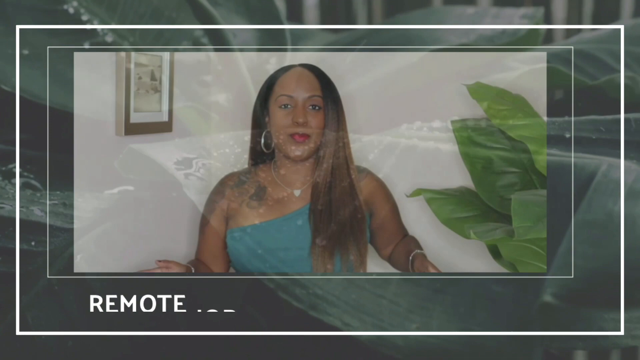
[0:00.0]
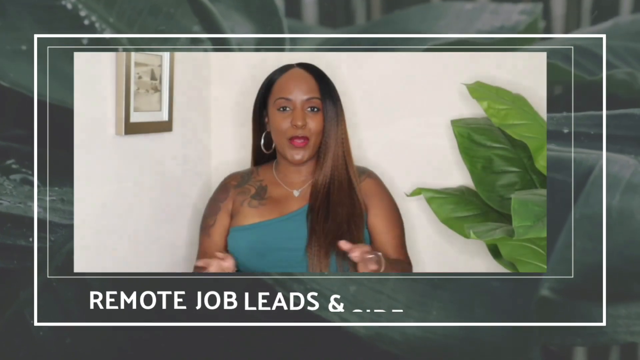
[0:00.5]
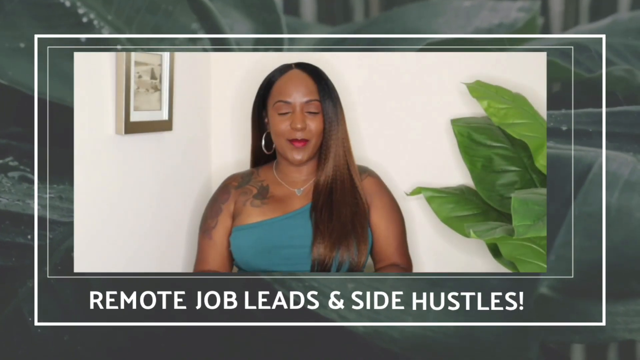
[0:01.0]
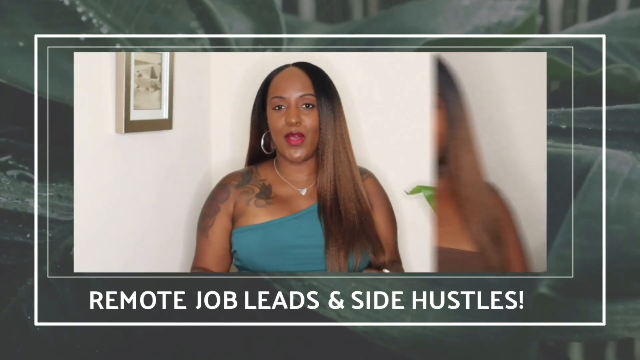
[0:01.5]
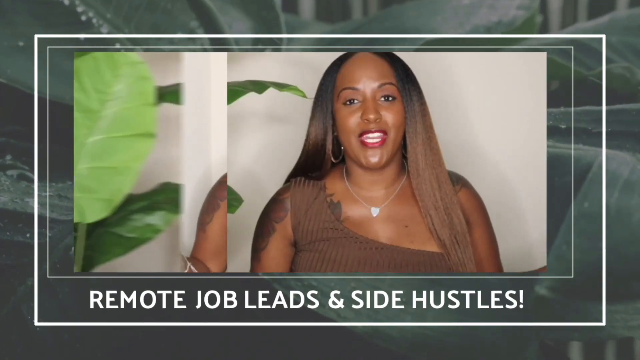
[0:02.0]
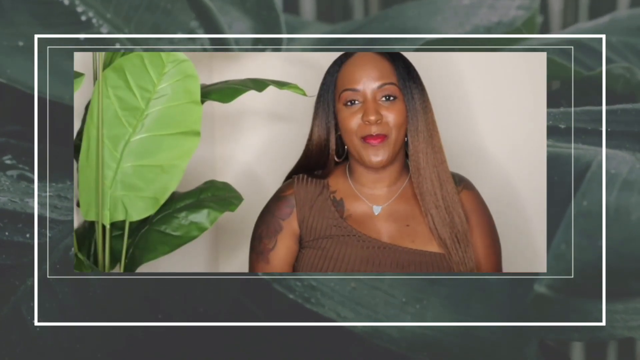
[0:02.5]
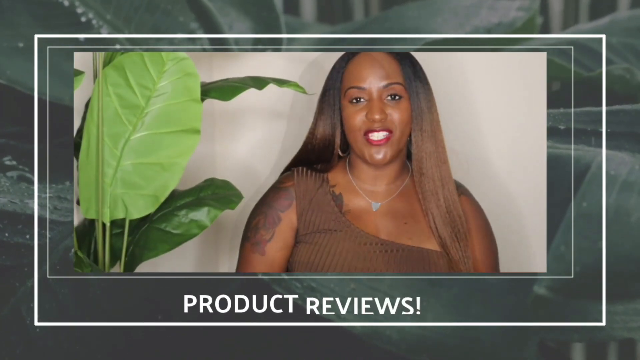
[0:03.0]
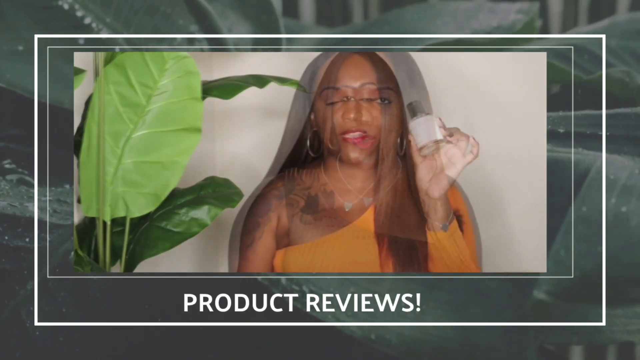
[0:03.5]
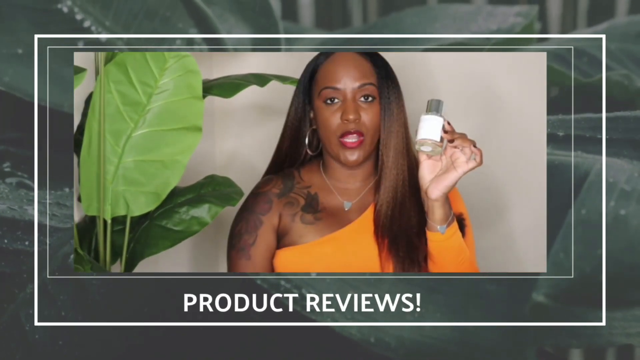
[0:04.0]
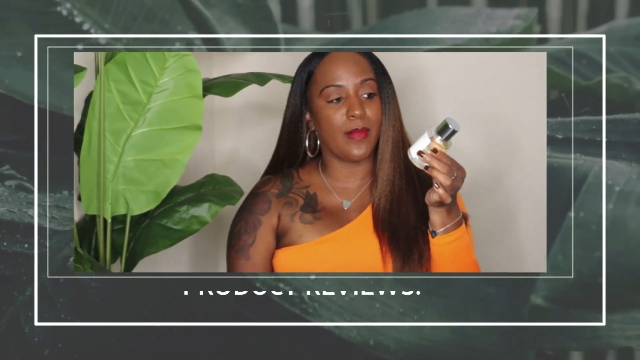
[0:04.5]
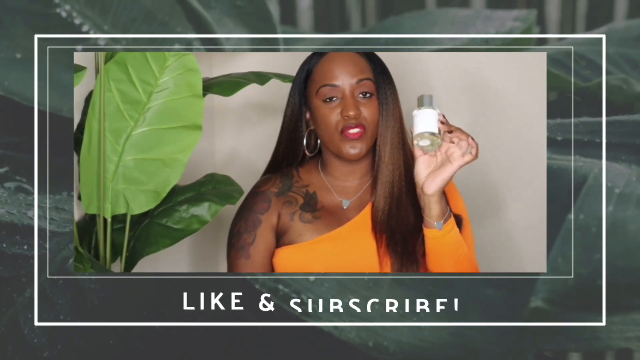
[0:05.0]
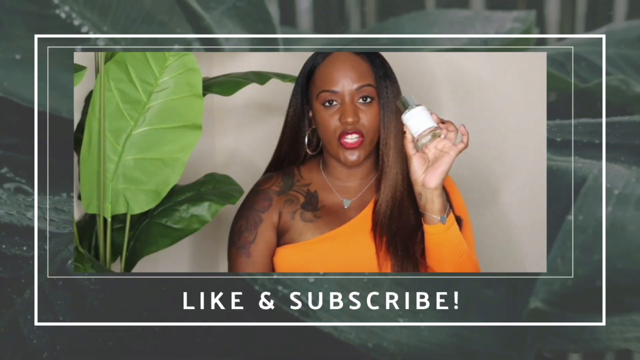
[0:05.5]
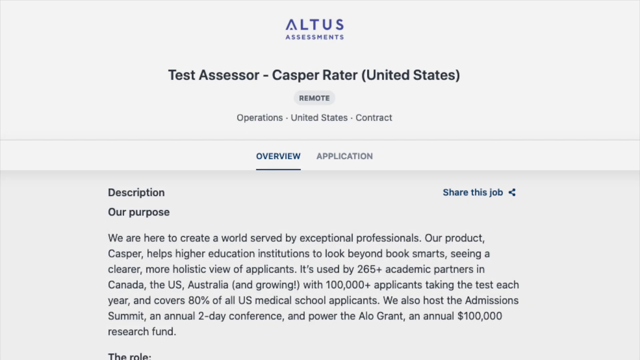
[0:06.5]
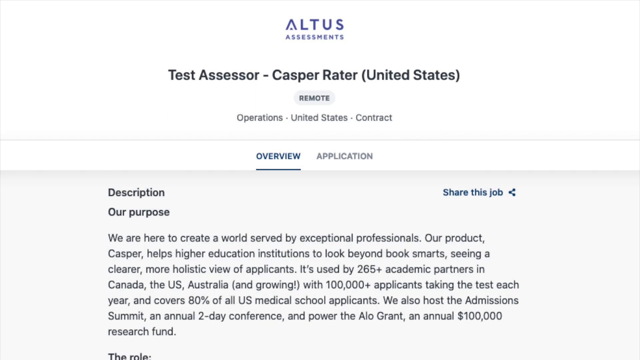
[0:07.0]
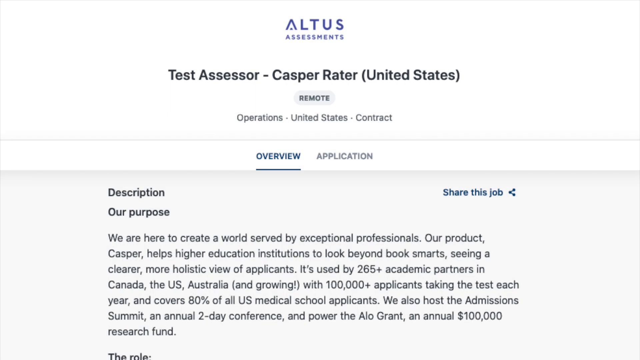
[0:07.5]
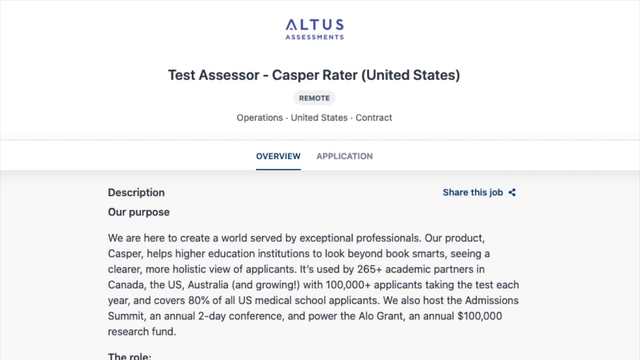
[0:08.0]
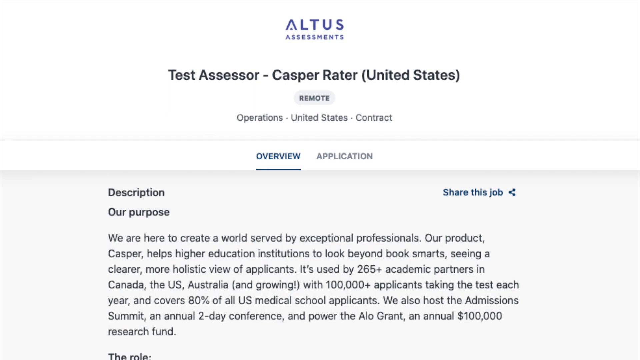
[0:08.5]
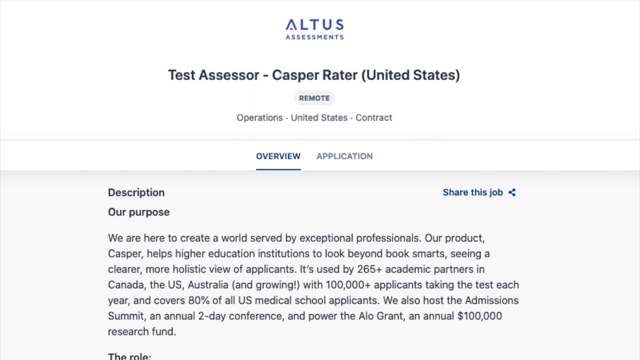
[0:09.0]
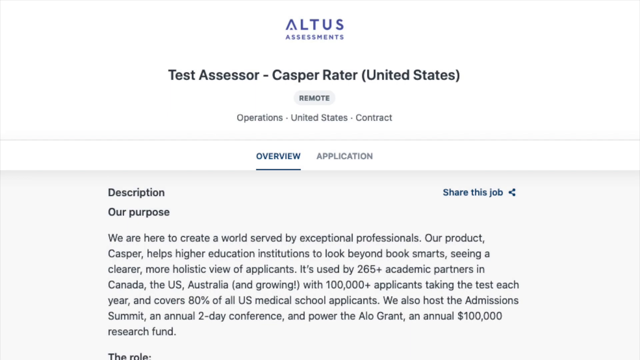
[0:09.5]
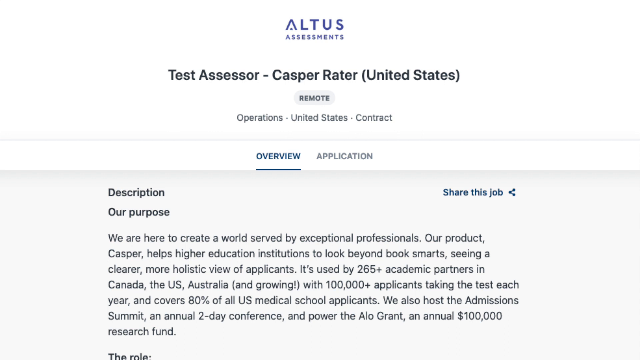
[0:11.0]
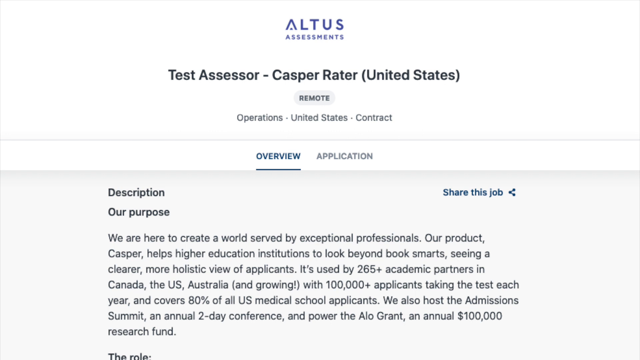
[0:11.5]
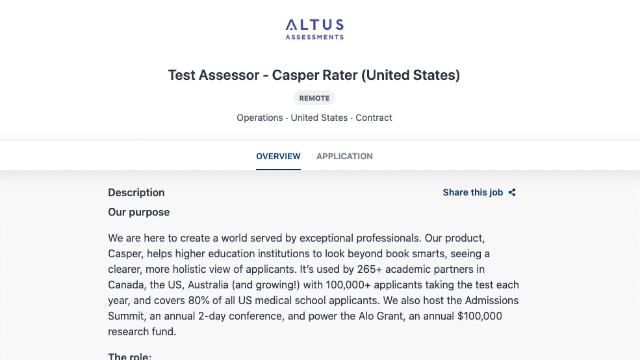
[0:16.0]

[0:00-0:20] A woman is showing a product in a review video. On-screen text describes a Casper rater role in the United States, with remote operations, a contract, an overview and applications. The description reads "Our purpose: We are here to create a world served by exceptional professionals. Our product Casper helps higher education institutions" to "look beyond book smarts, seeing a cleaner, more holistic view of applicants." It says Casper is used by "2,065 plus academic partners in Canada, the US, Australia" and "covers 80% of all the US medical school applicants," and that the company also hosts a summit described as "an annual two day conference."